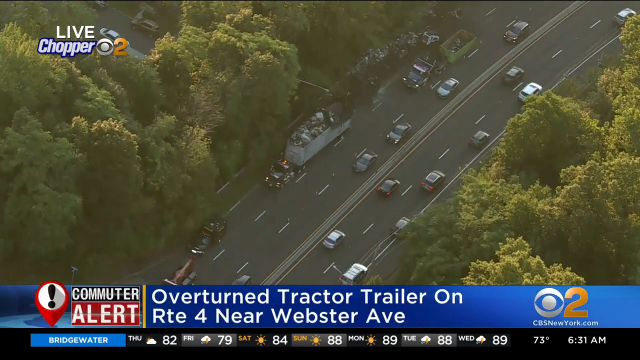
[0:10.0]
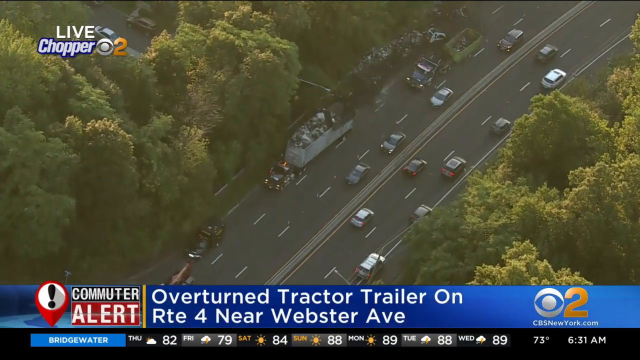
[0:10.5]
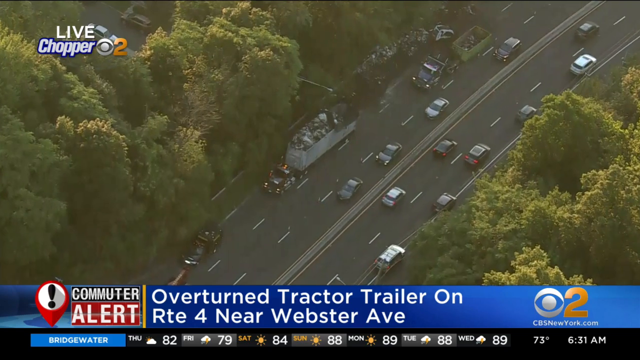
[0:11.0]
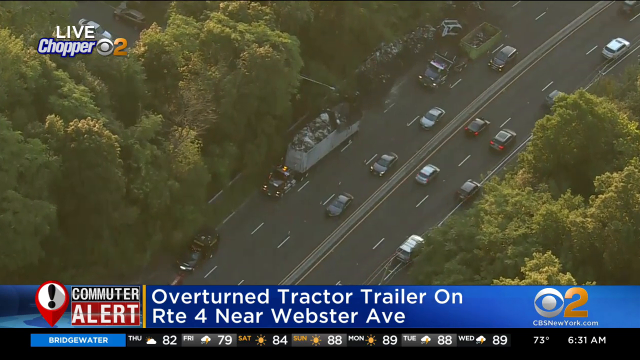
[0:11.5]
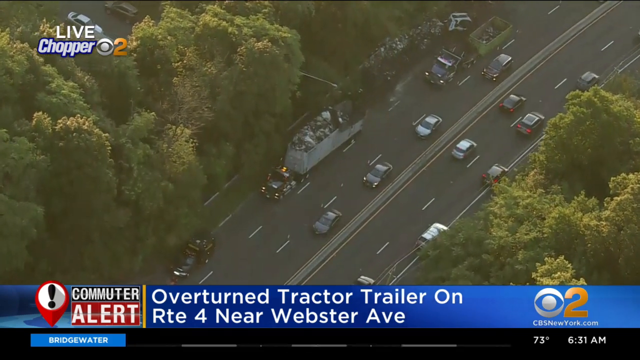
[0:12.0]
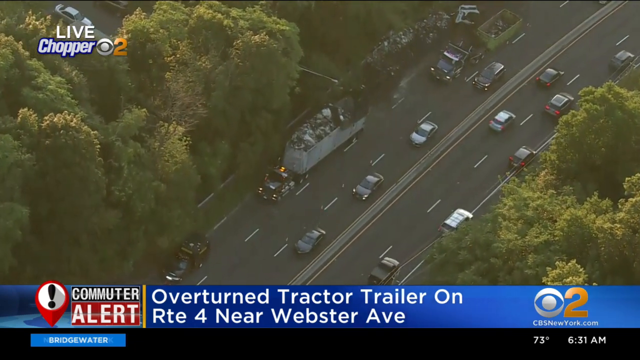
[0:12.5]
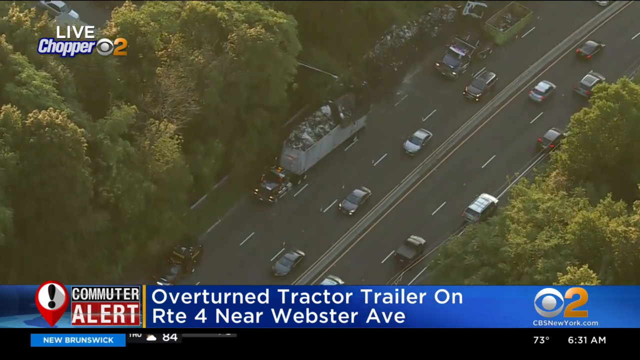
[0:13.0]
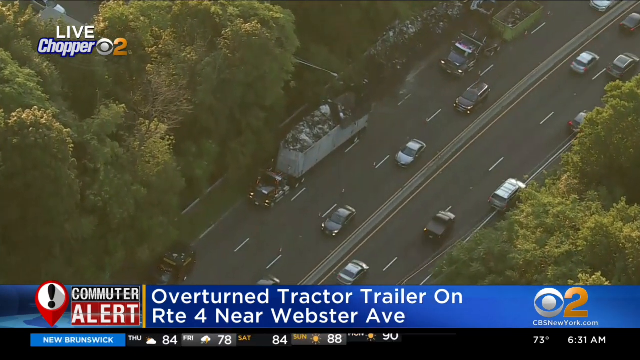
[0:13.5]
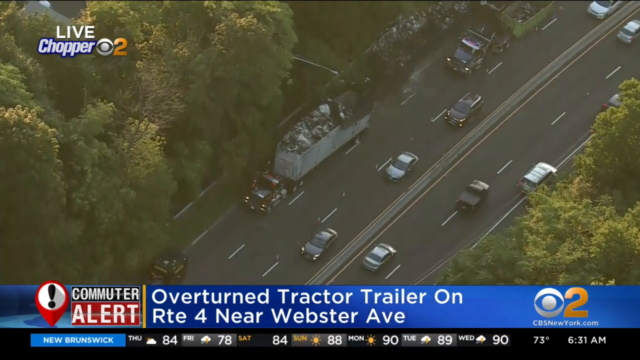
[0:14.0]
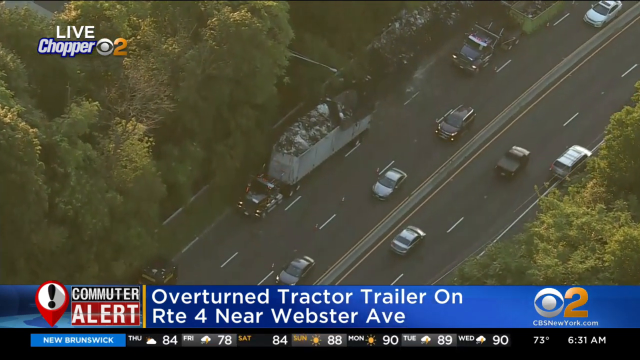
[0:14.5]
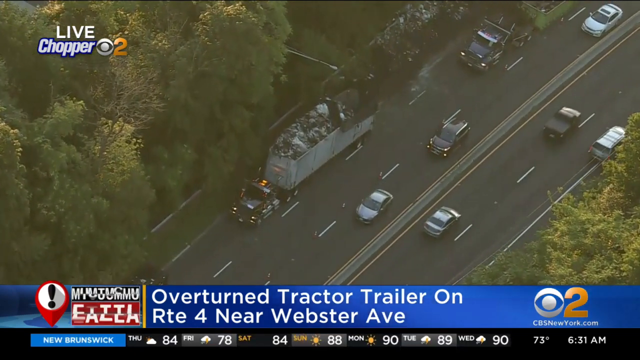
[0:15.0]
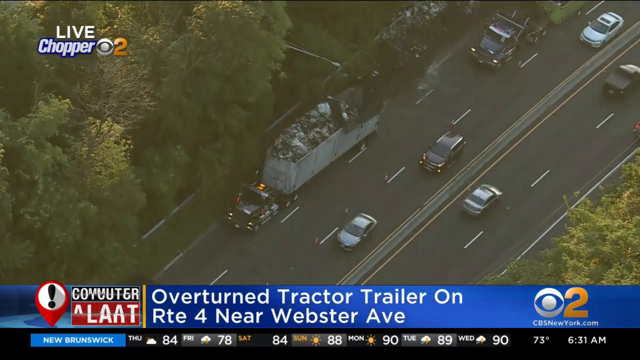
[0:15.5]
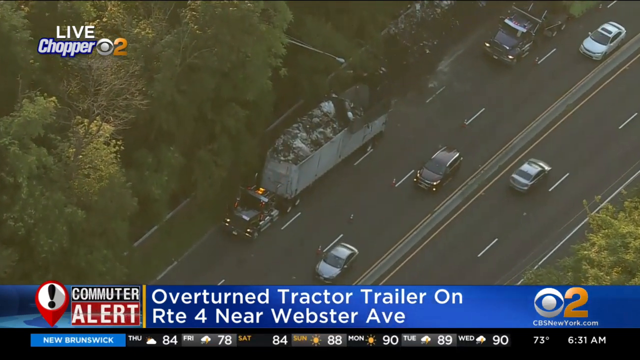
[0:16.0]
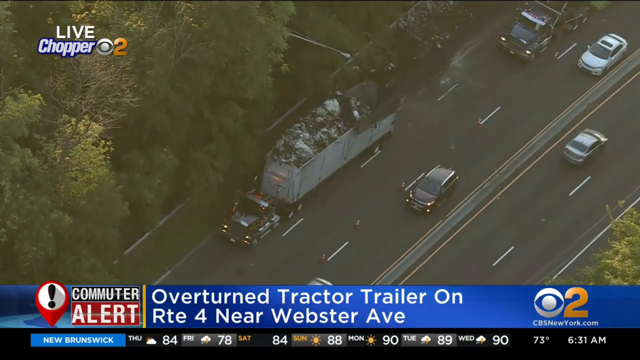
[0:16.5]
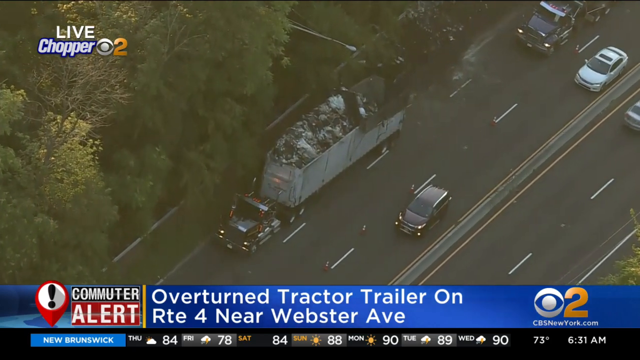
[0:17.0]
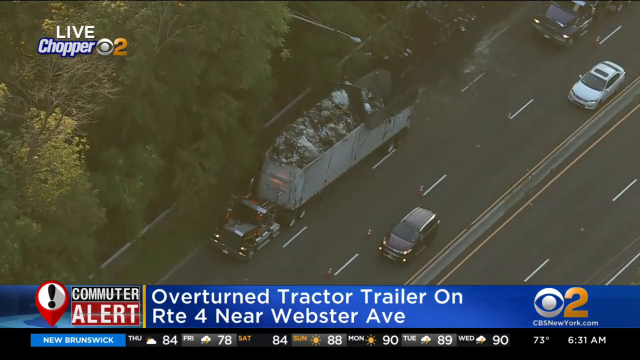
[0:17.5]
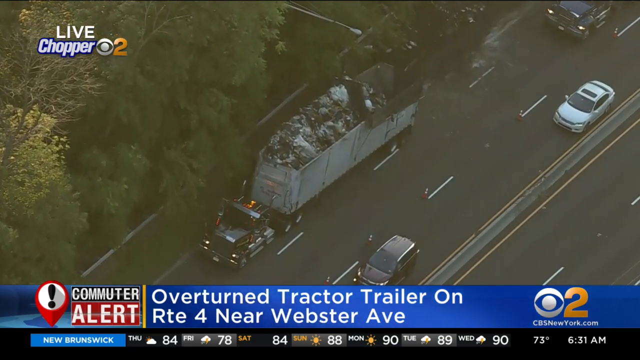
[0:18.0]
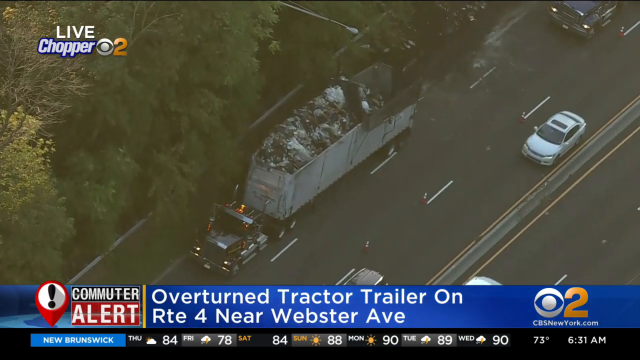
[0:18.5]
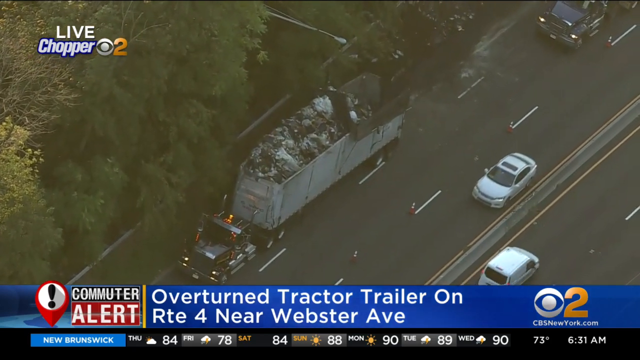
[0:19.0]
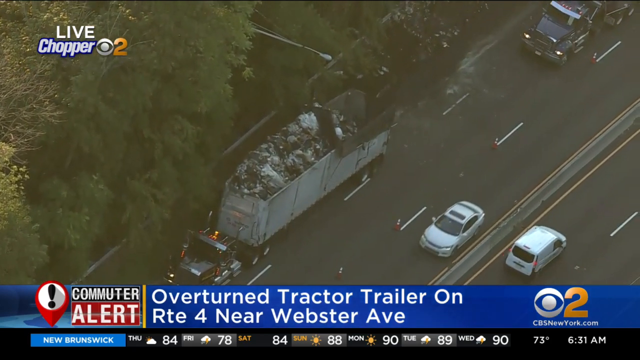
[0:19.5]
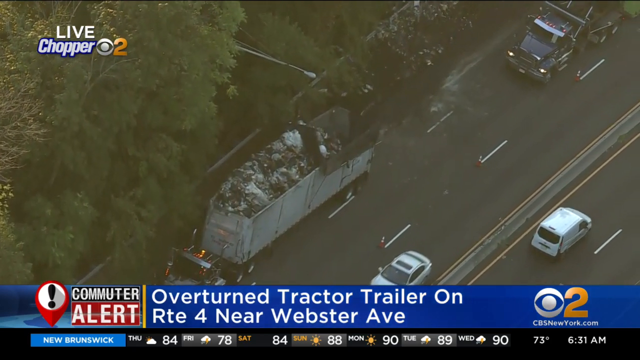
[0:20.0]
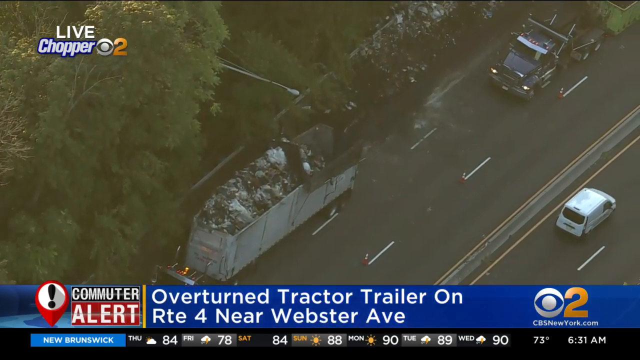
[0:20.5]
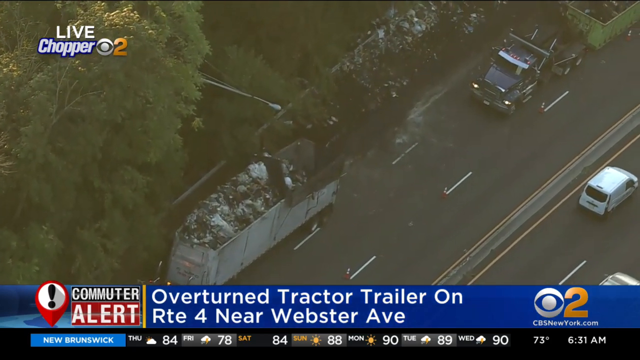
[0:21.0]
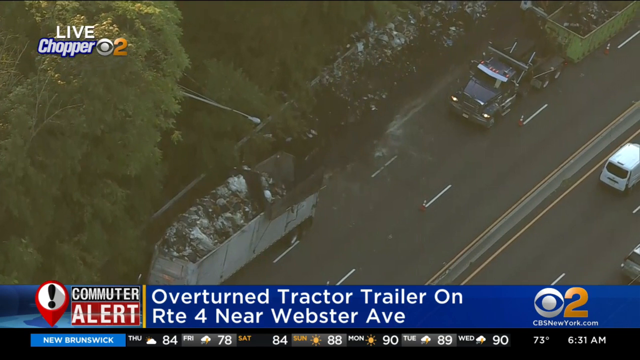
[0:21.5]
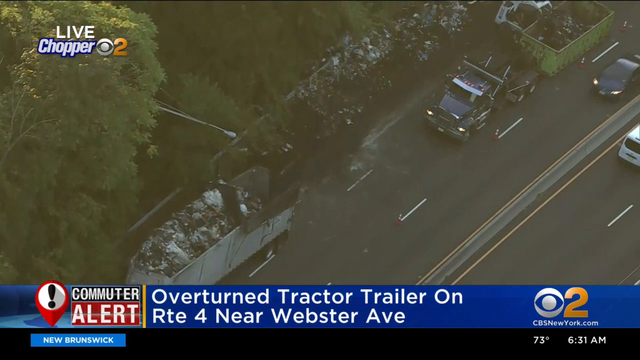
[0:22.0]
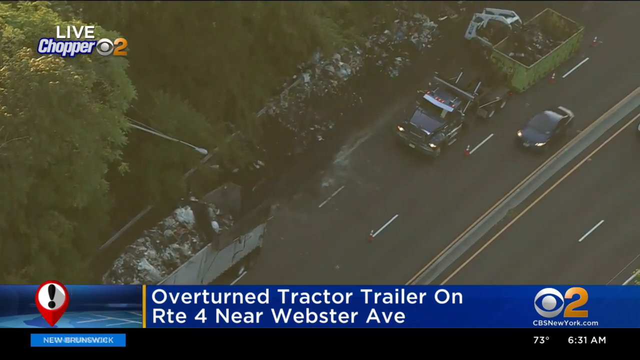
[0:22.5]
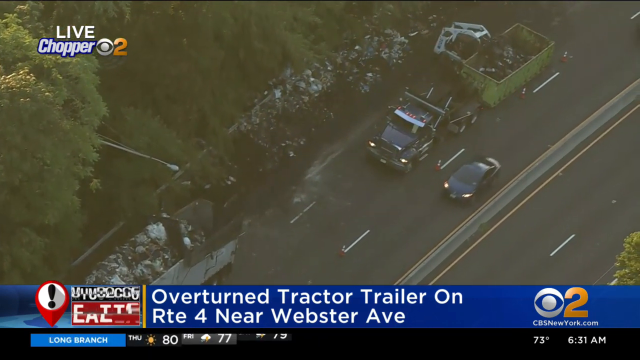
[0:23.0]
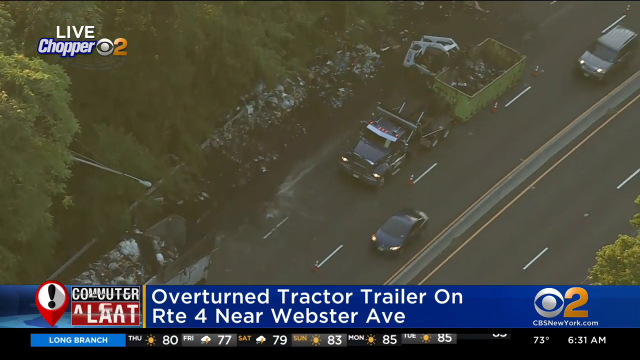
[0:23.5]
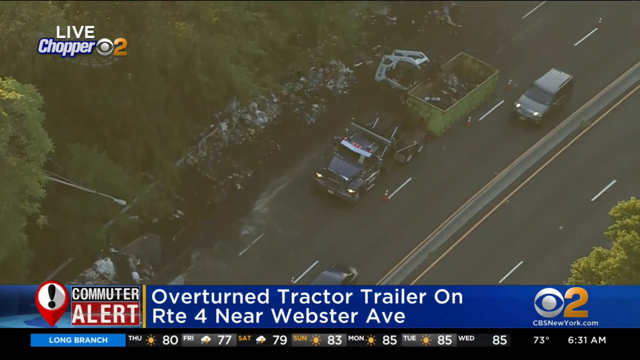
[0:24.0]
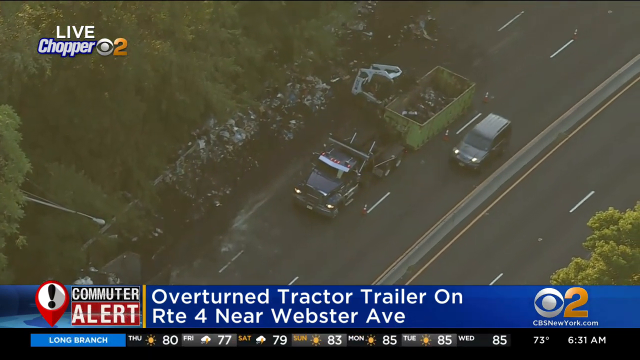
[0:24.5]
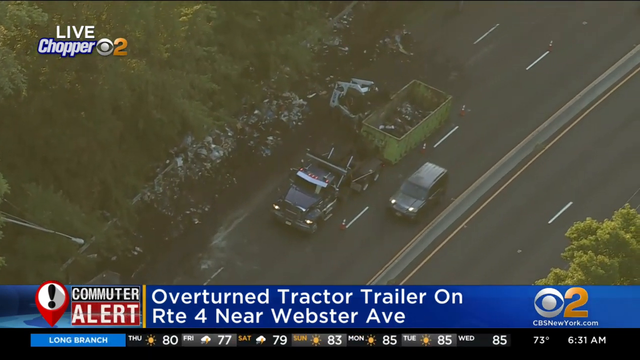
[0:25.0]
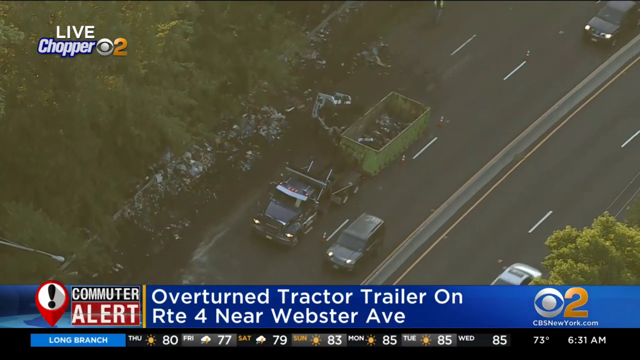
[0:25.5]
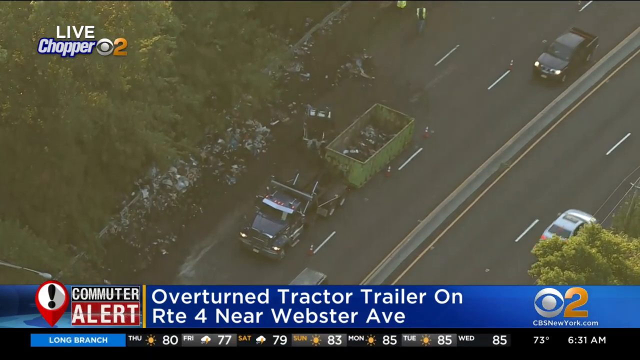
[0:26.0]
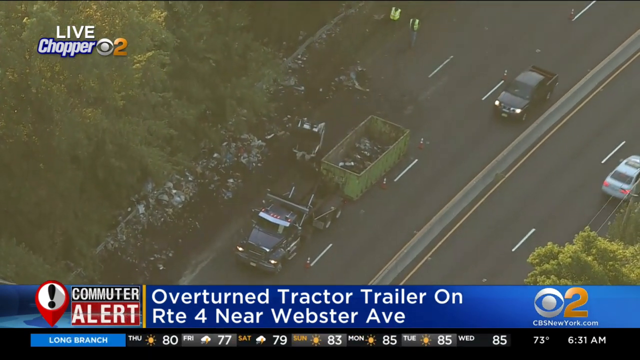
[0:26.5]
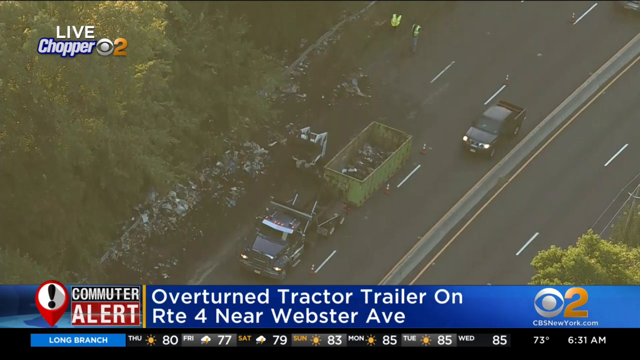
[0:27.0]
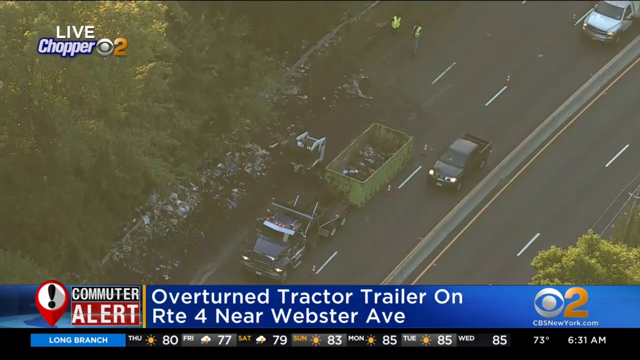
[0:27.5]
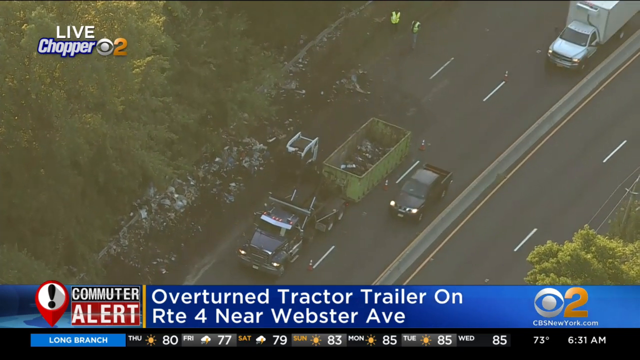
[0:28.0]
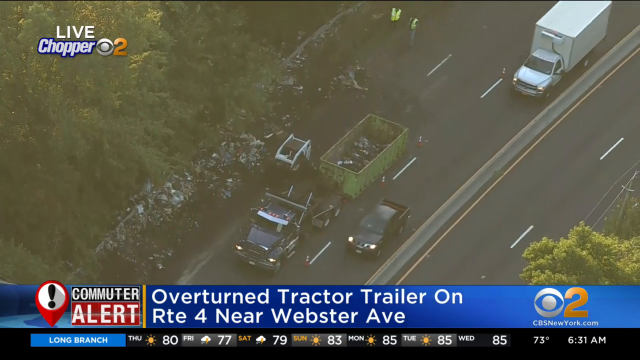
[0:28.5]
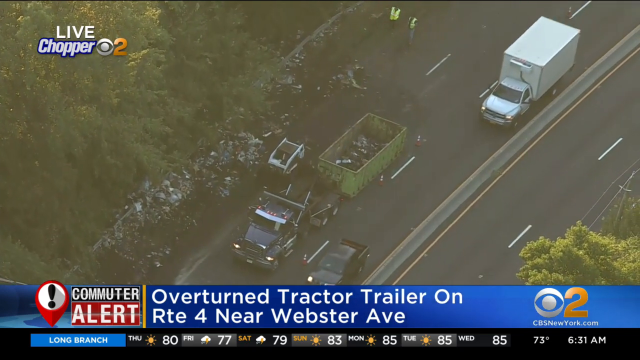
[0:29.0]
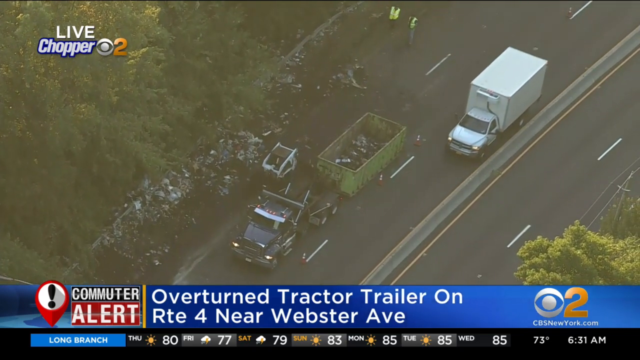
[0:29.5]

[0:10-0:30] The live aerial feed from high in the sky shows the overturned tractor trailer on RTE4 near Webster Avenue, which is slowing down the traffic. The camera zooms in on the scene to give a clearer view of what is happening. A small tractor is trying to clear the mess on the side of the road. Traffic is moving only in the first lane, because the truck is standing right in the middle of the middle lane, so the cars pass through the first lane.